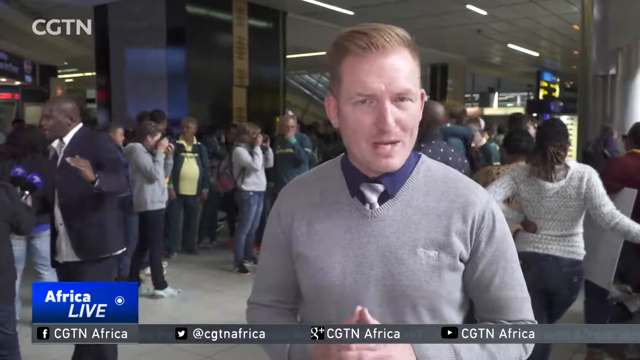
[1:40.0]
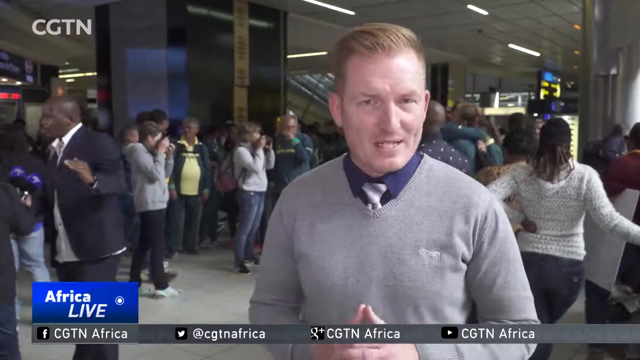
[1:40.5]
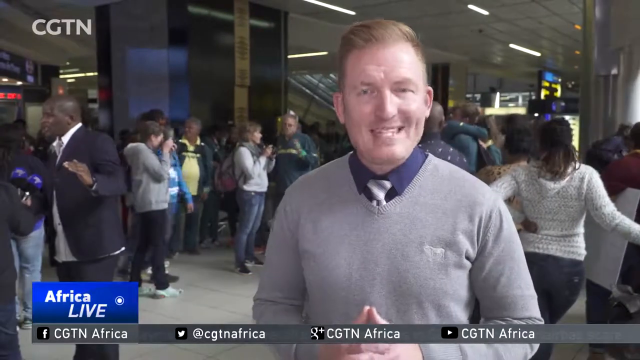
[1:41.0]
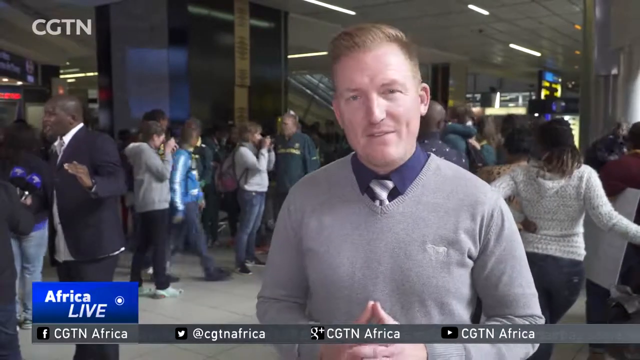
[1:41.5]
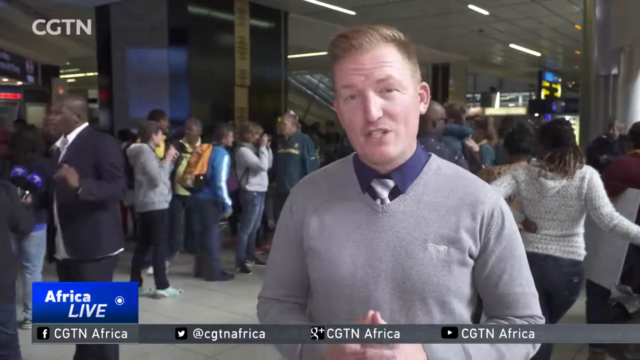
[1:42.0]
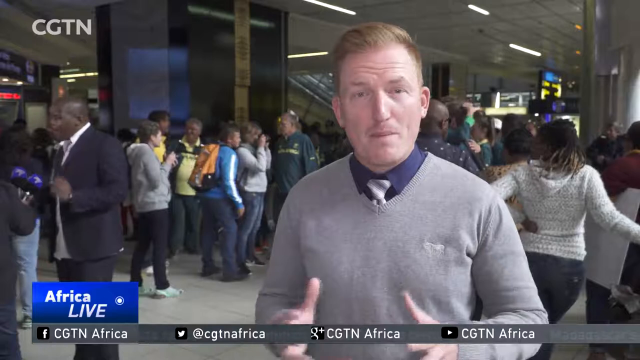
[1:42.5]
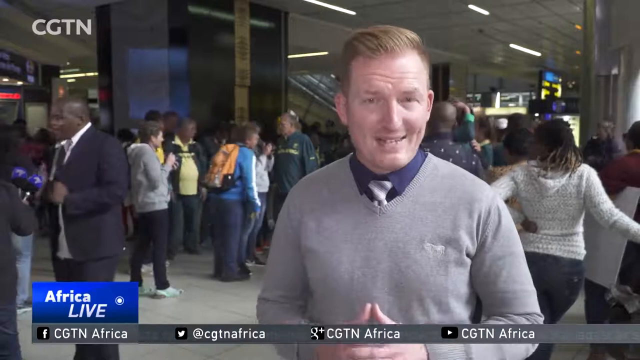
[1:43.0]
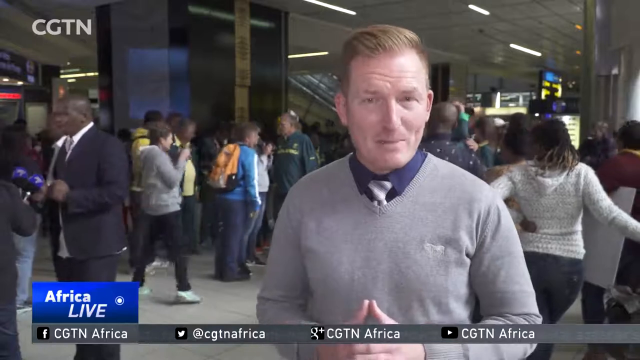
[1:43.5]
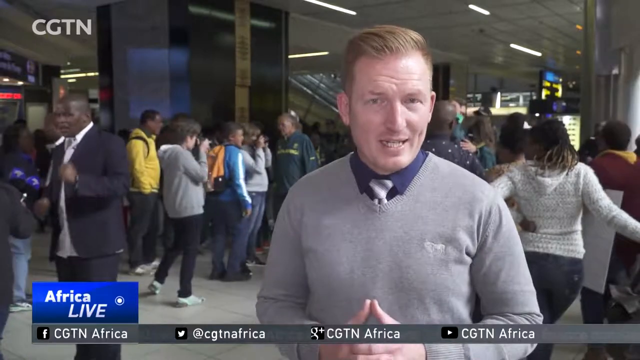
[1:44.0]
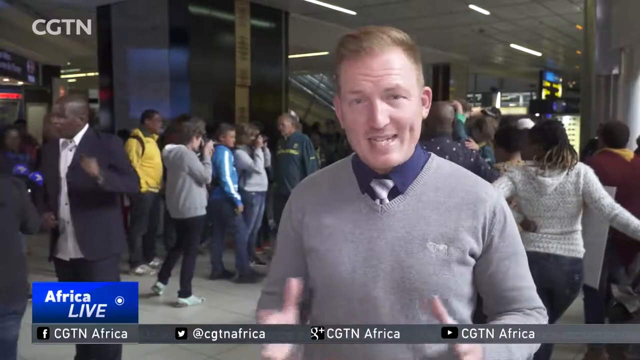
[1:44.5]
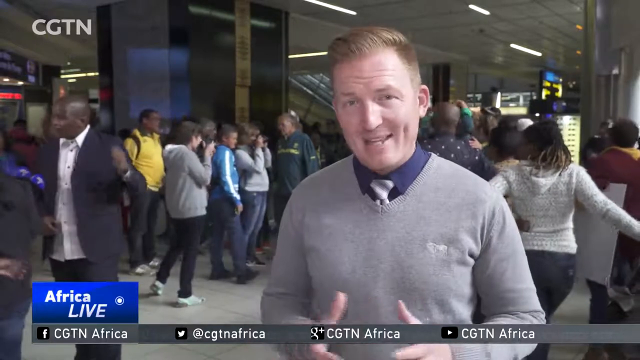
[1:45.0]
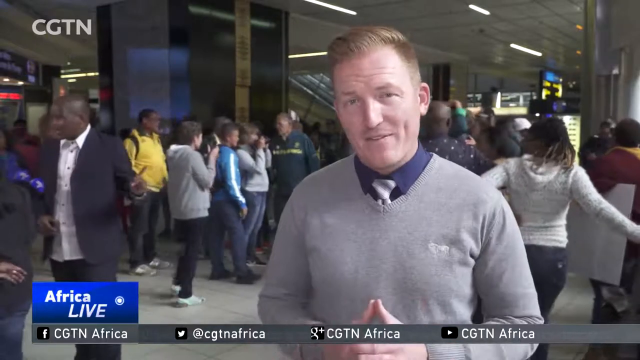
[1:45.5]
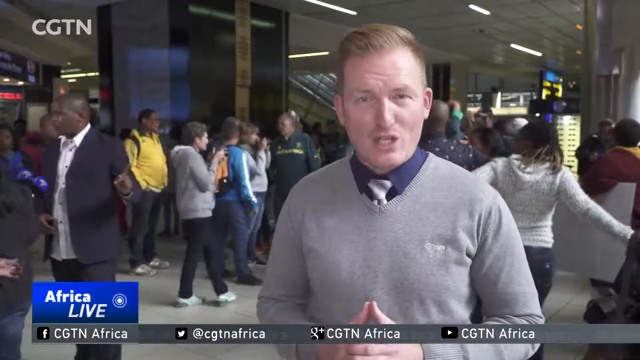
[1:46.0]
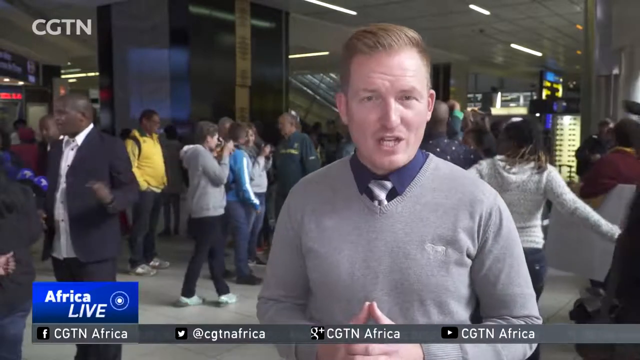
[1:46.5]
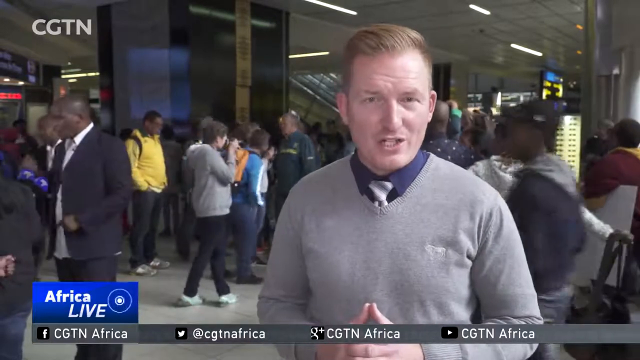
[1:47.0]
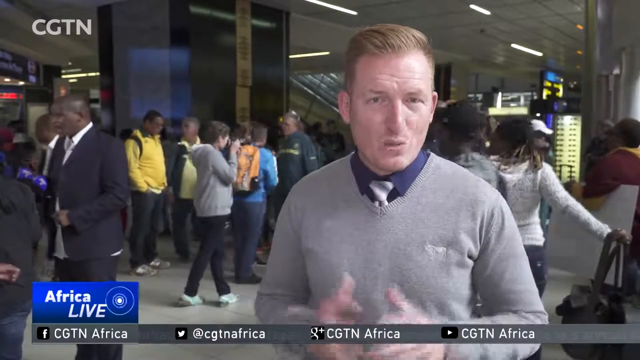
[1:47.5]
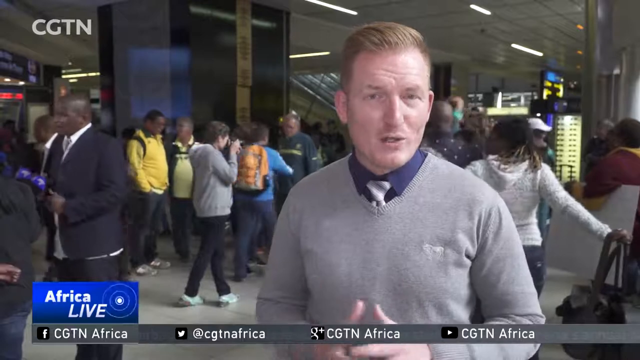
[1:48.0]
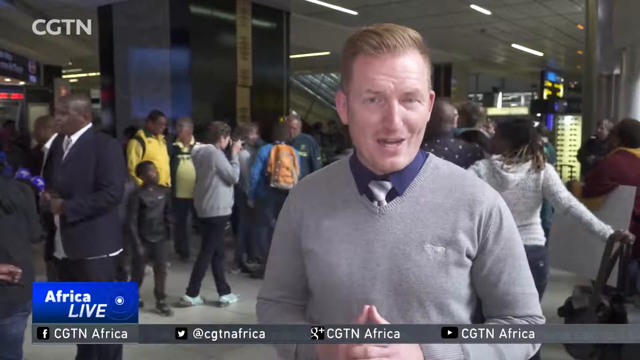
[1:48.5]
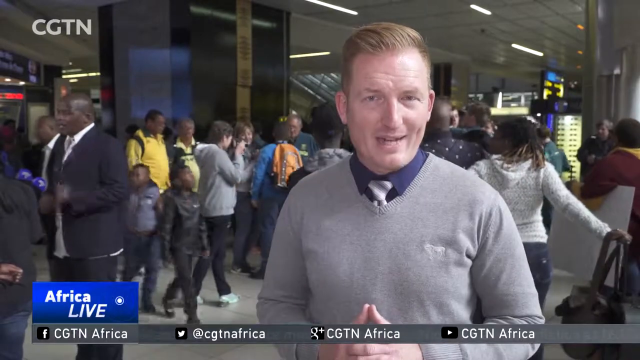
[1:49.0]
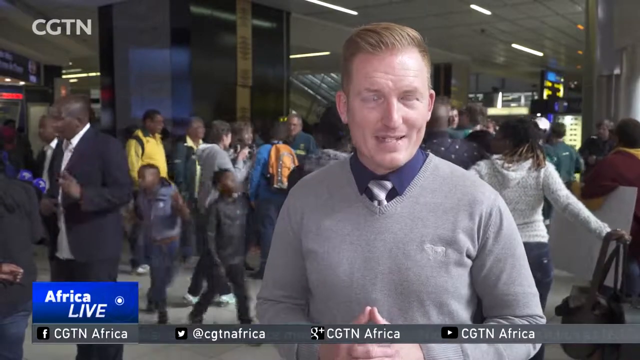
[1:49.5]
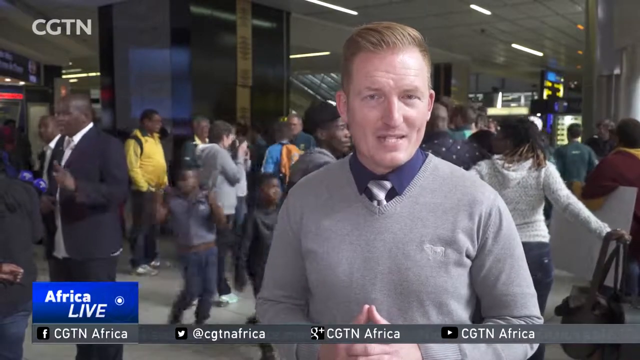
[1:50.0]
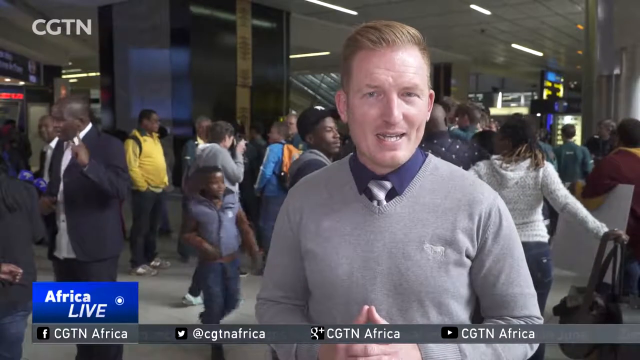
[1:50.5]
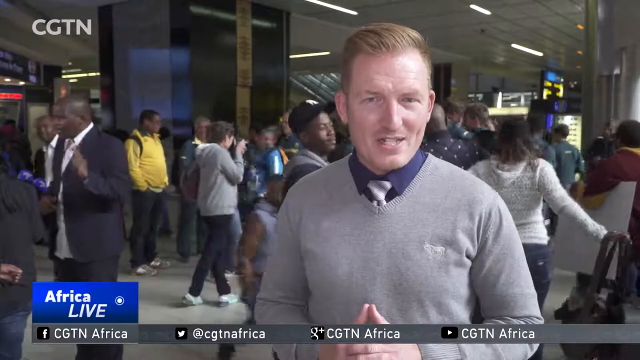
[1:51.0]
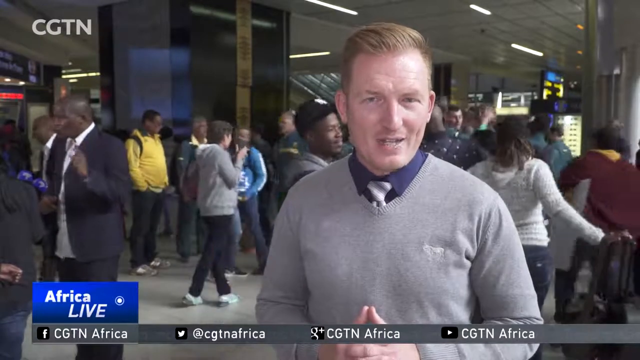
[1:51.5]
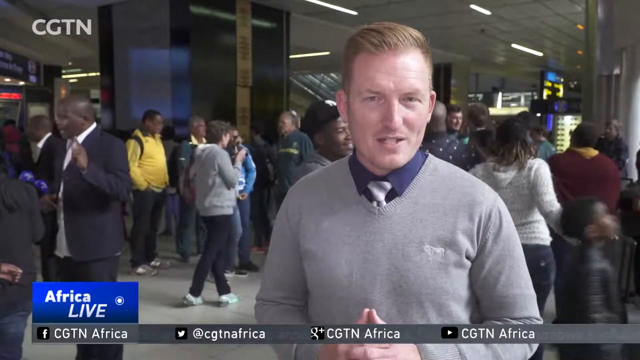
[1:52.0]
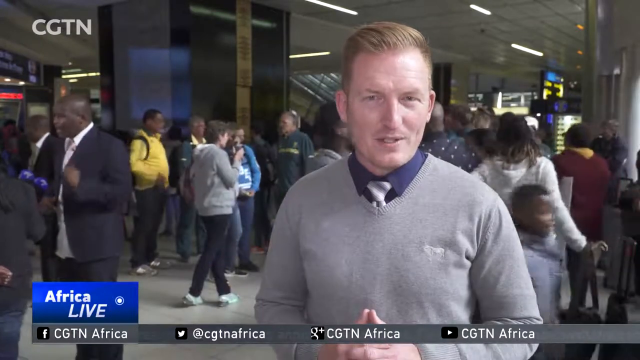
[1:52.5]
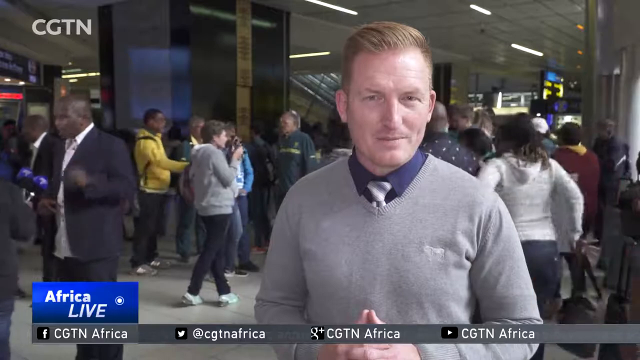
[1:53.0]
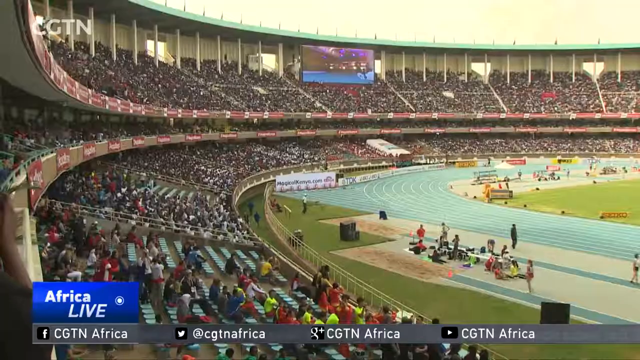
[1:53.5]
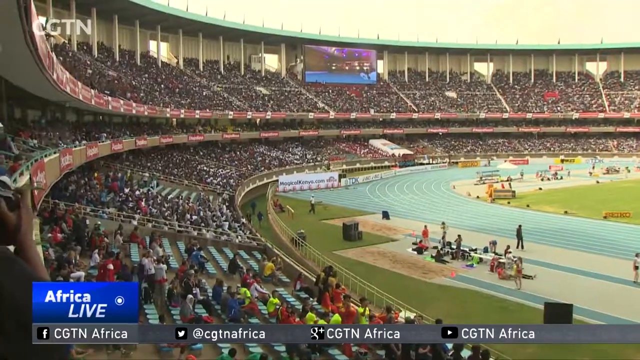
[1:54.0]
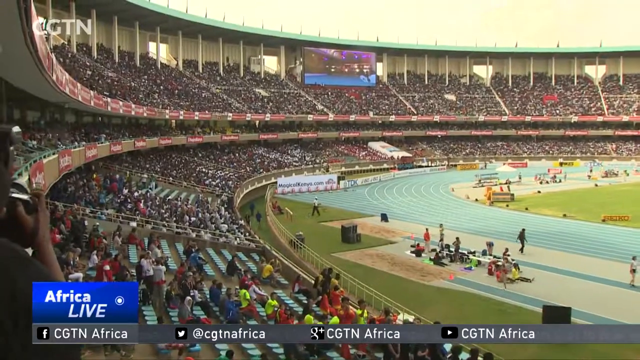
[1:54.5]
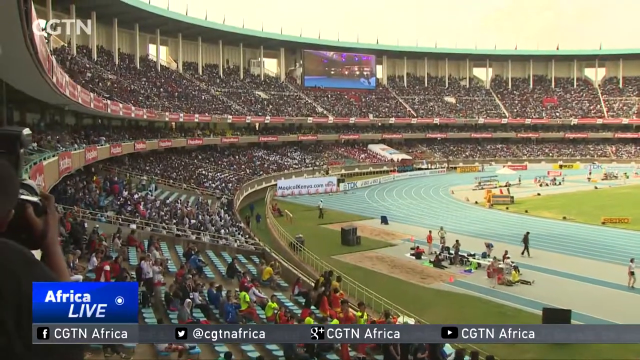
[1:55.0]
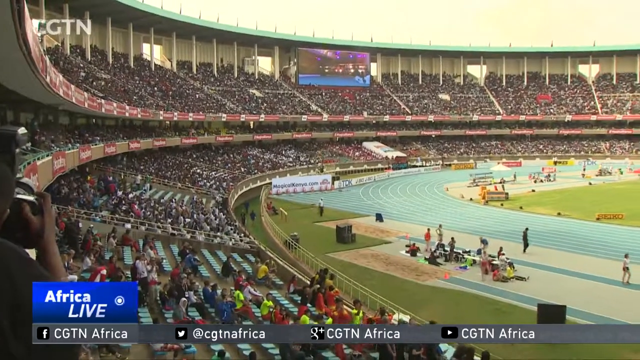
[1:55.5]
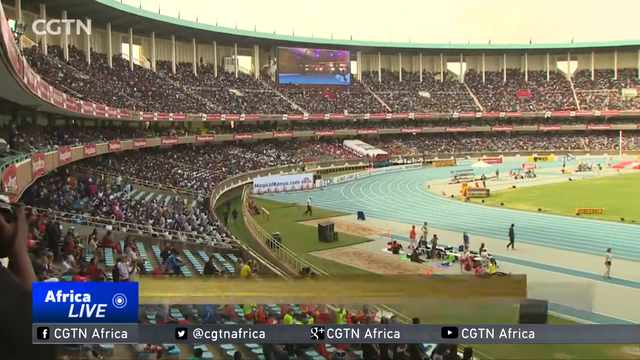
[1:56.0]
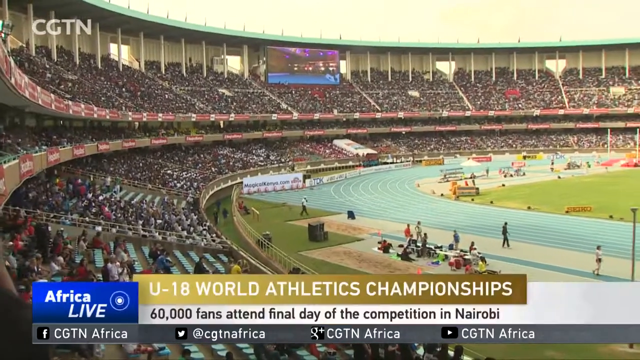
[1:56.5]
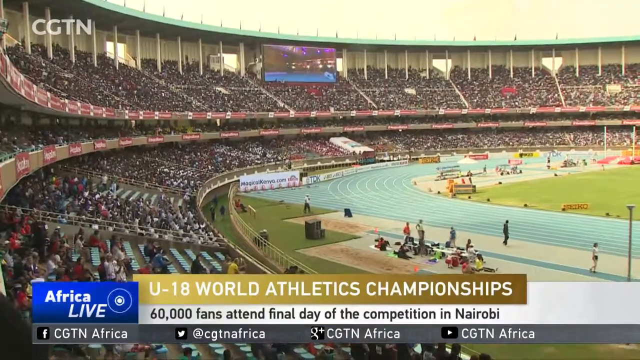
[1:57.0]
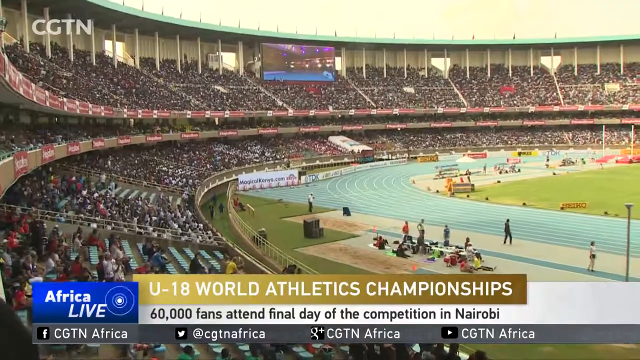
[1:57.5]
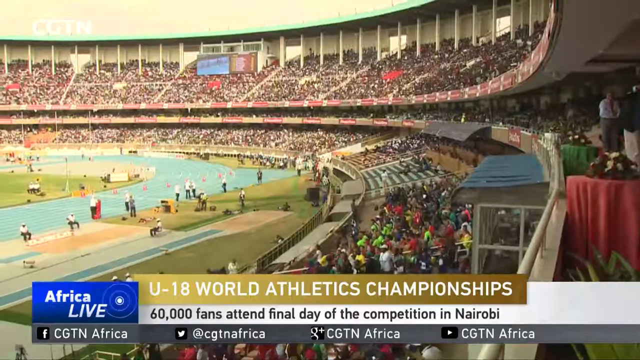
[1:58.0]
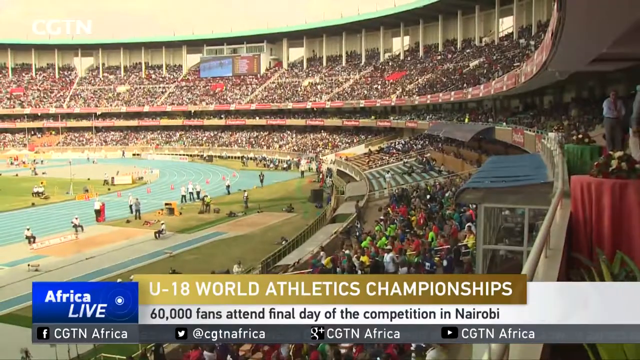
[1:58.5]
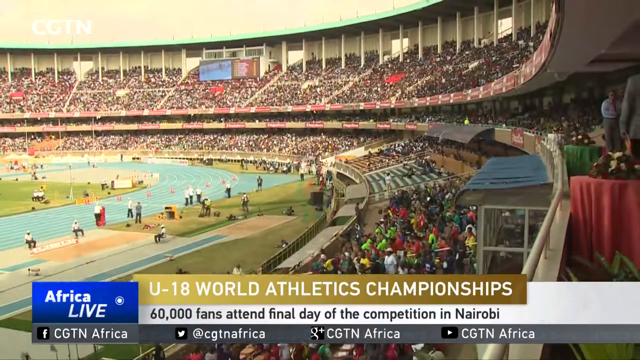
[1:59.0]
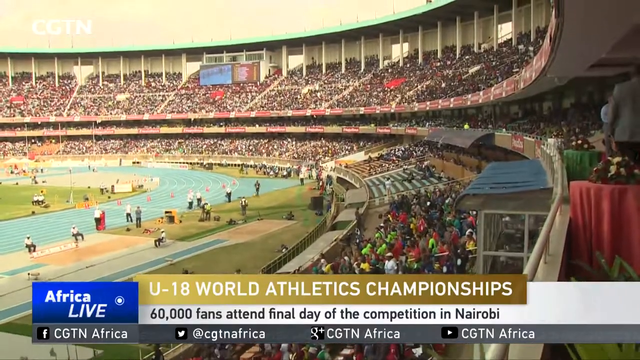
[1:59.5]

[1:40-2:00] A newscaster stands inside the airport reporting as happy family members greet the athletes coming through one by one, with hugs, kisses and crying. The newscaster is shown from the waist up in the center, directly facing the camera, wearing a gray sweater and a preppy shirt and tie; he is pale with reddish hair slicked back. He smiles, showing his dimples, and his hands, in a prayer position, open and close as he talks. "Africa Live" is on screen. The video then cuts to previously filmed footage of the event in a large stadium, with the track and field at the center, seen from an aerial view with no close-ups of the athletes. "Africa Live" is still shown, and a banner opens reading "U18 World Athletics Championships" and "60,000 fans attend final day of the competition in Nairobi."